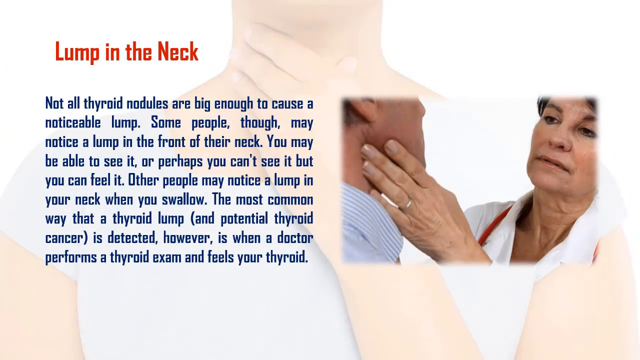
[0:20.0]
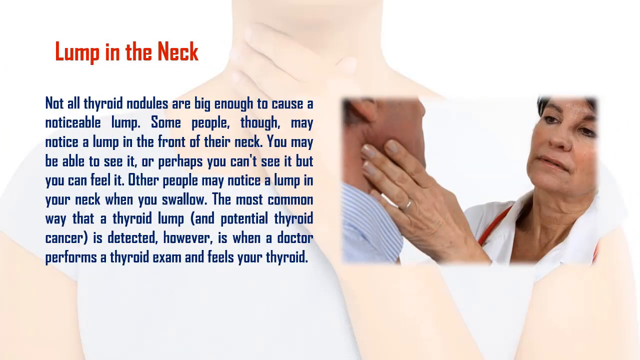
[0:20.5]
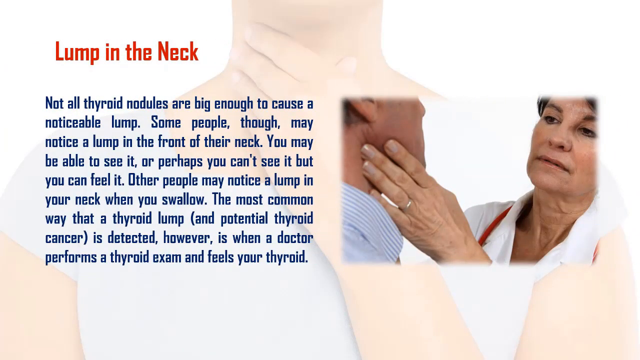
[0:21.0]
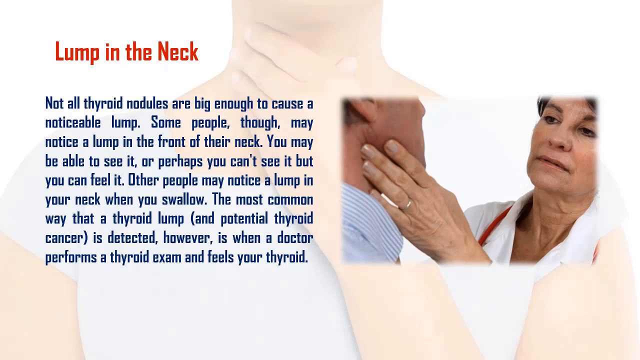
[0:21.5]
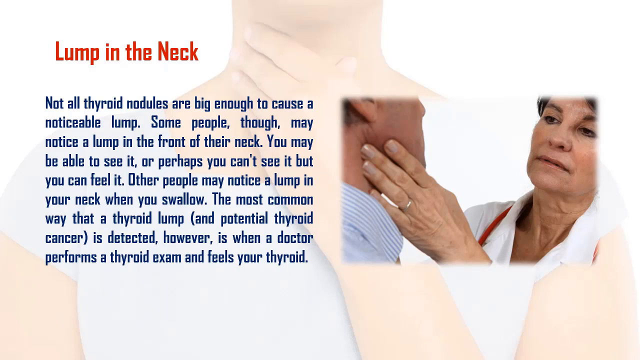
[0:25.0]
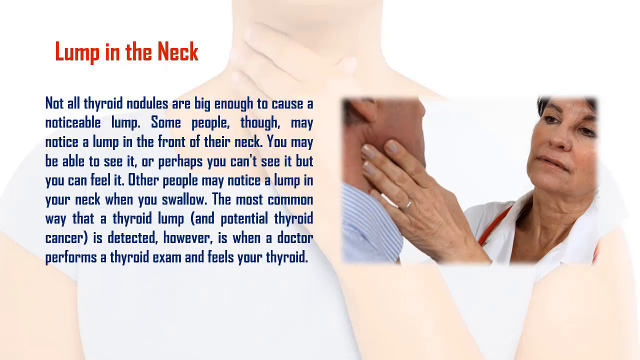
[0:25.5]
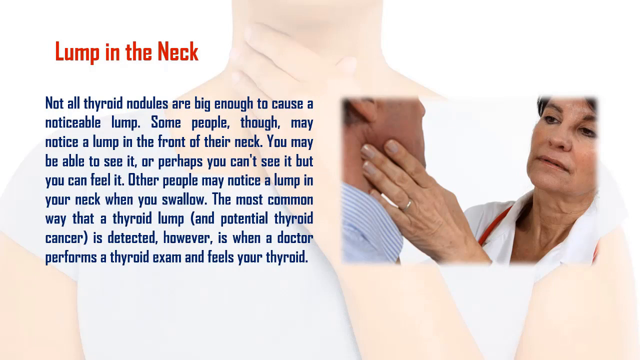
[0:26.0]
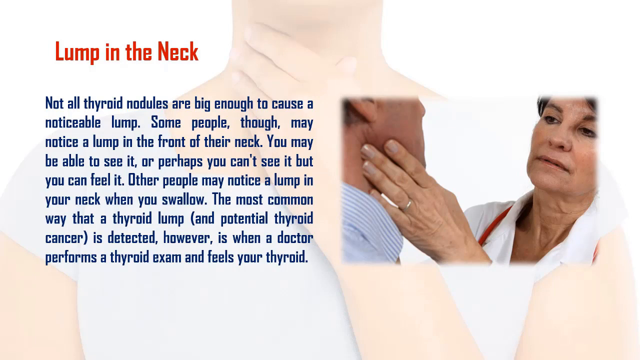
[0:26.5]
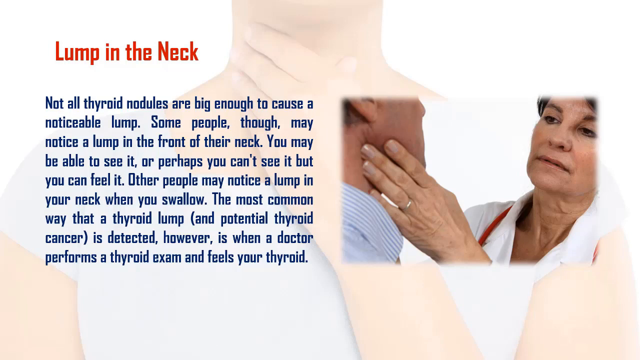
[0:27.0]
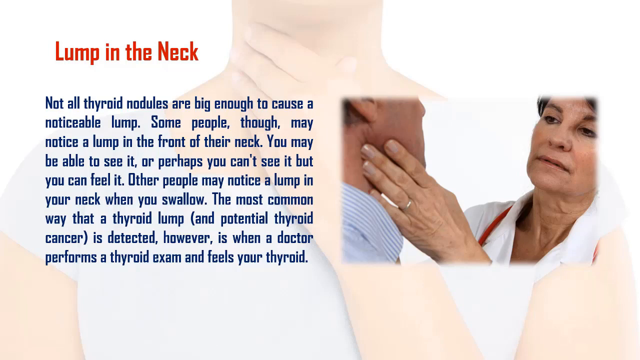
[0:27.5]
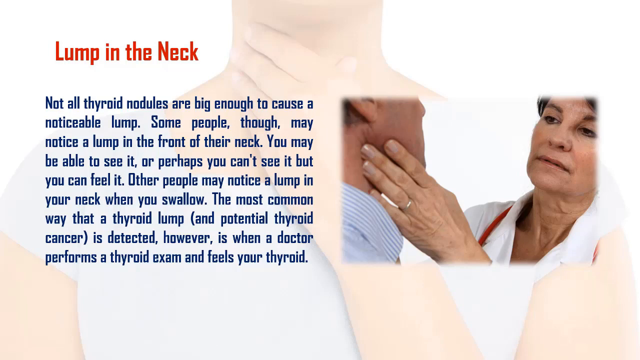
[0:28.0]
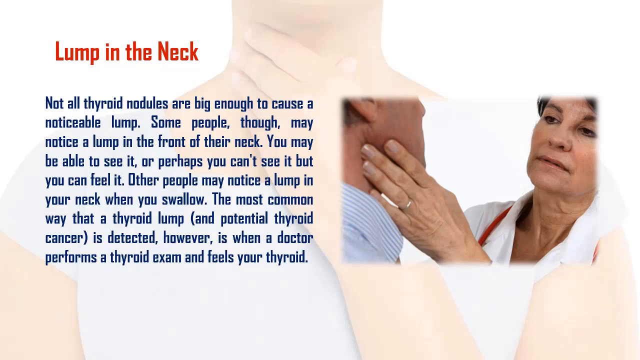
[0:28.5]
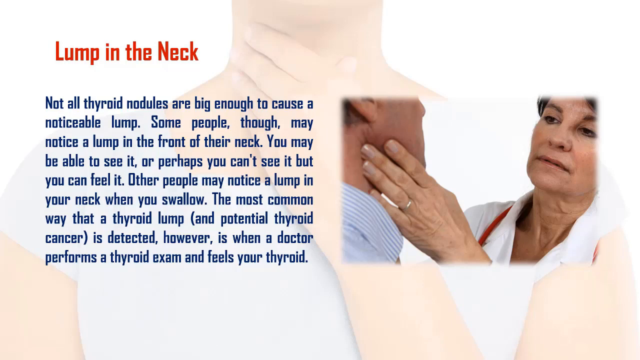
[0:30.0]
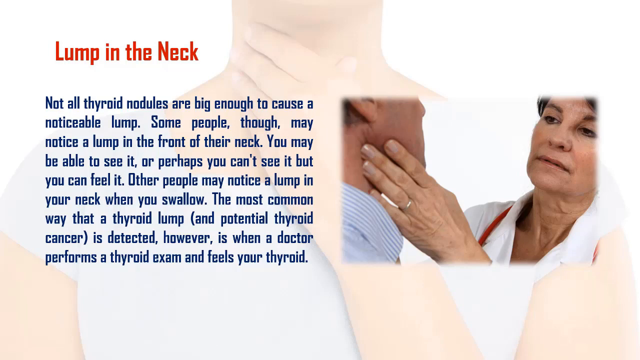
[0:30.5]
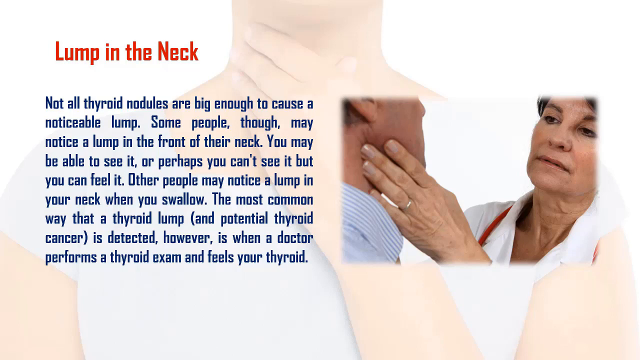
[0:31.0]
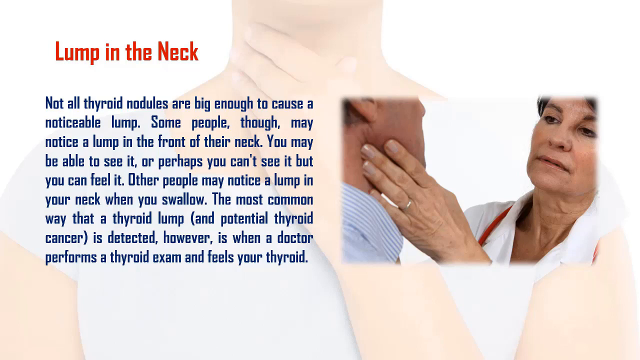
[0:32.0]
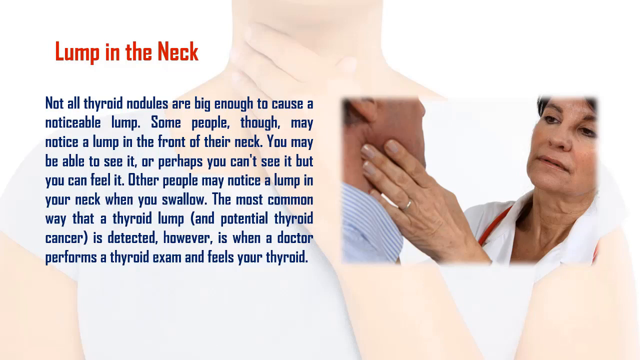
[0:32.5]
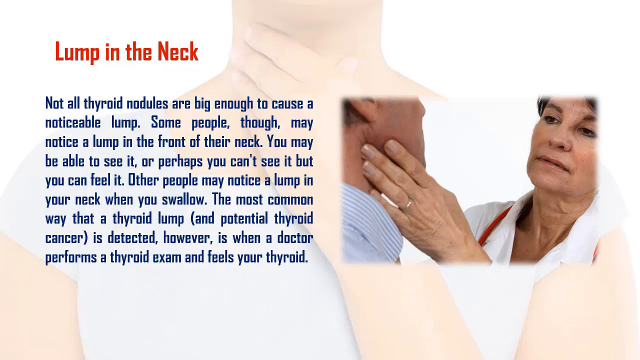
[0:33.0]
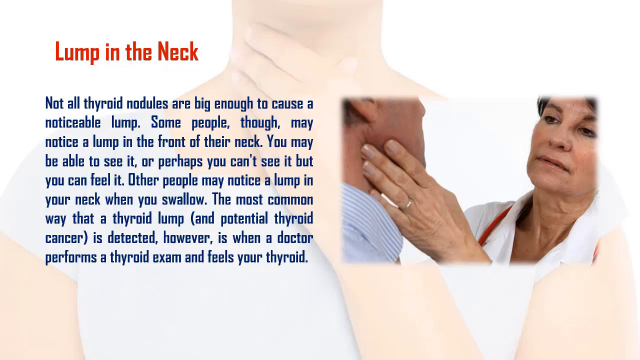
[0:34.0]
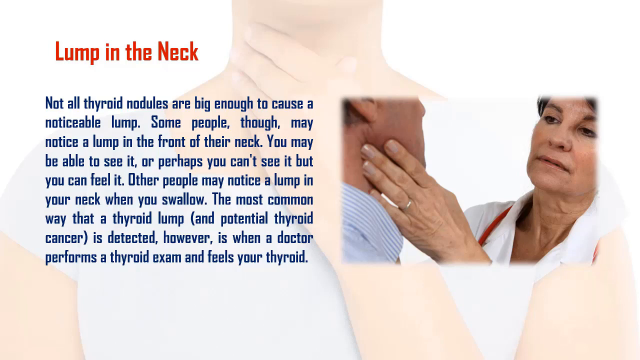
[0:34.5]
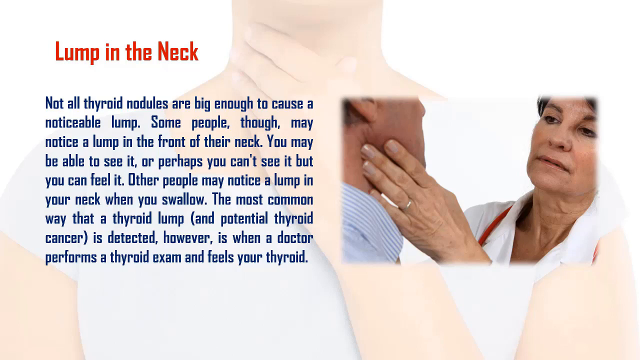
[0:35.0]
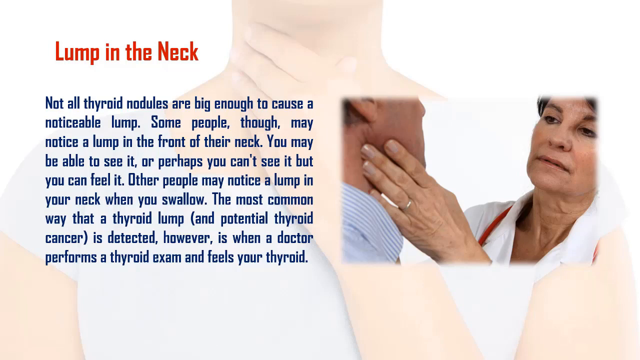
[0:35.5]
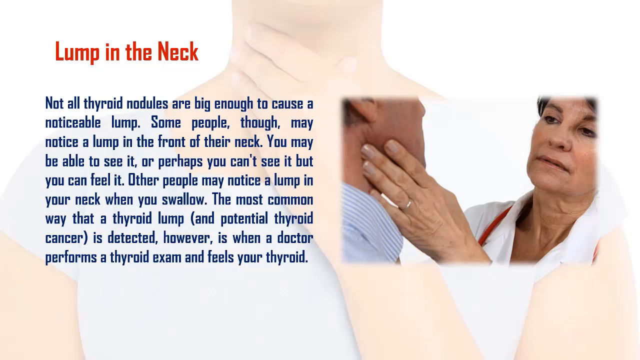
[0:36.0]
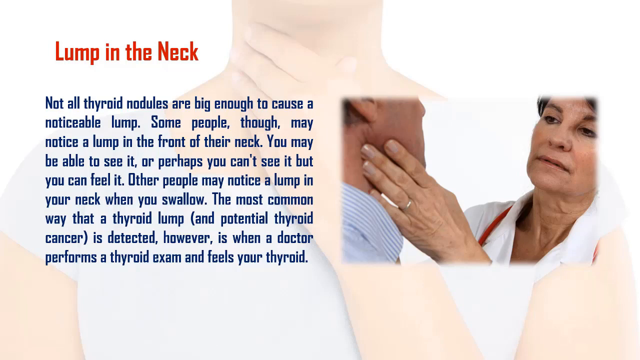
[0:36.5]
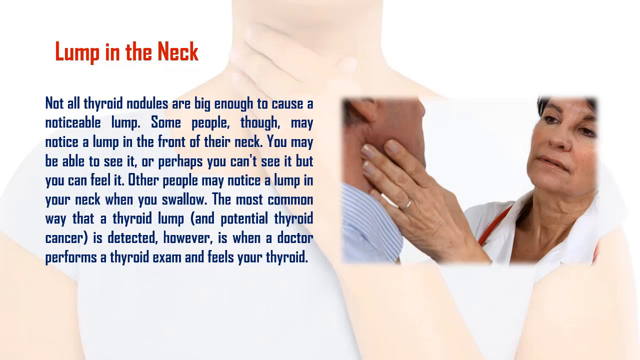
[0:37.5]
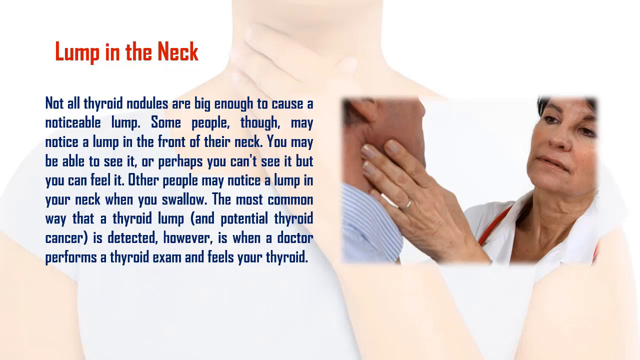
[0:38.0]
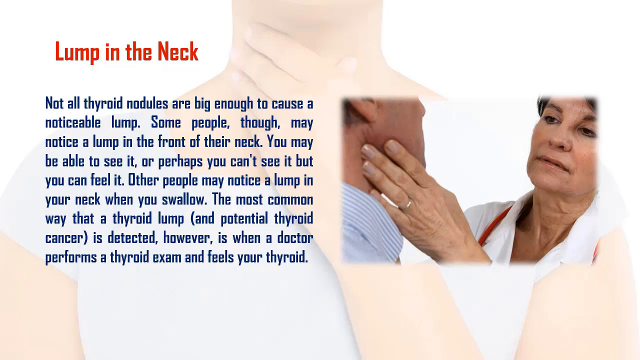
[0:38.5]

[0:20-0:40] This part of the Disease Facts video about thyroid cancer shows, behind the words, a lady touching her own neck with her left hand, wearing a gray short-sleeved shirt that looks like flannel. "lump in the neck" appears in red font, and to the left, in navy blue, the text reads: "not all thyroid nodules are big enough to cause a noticeable lump some people though may notice a lump in the front of their neck you may be able to see it or perhaps you can't see it but you can feel it other people may notice a lump in your neck when you swallow the most common way that a thyroid lump and potential thyroid cancer is detected however is when your doctor performs a thyroid exam and feels your thyroid." On the right-hand side is a picture of a female doctor with dark hair and brown eyes who looks Italian-ish; her left hand is touching the right side of a man's neck. The man is white, appears to have brown hair, and wears a blue and white button-down shirt.